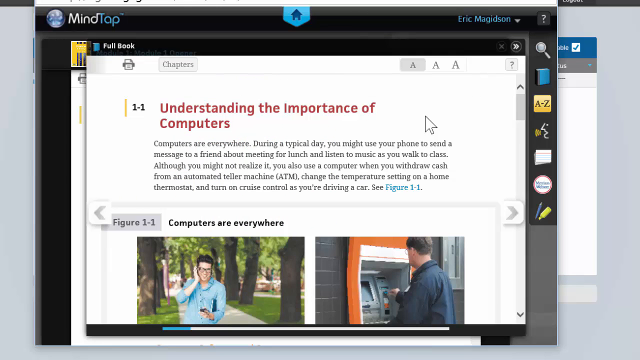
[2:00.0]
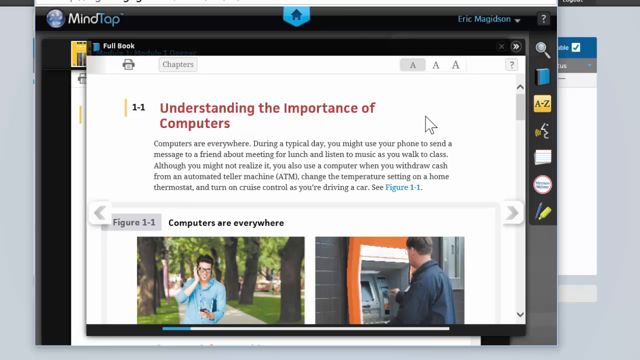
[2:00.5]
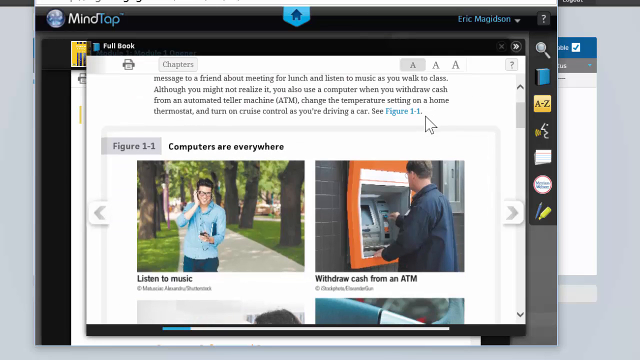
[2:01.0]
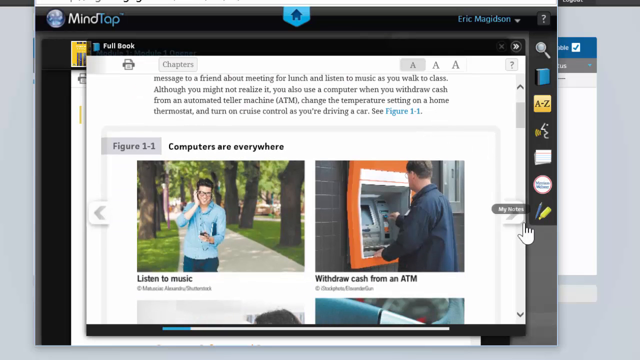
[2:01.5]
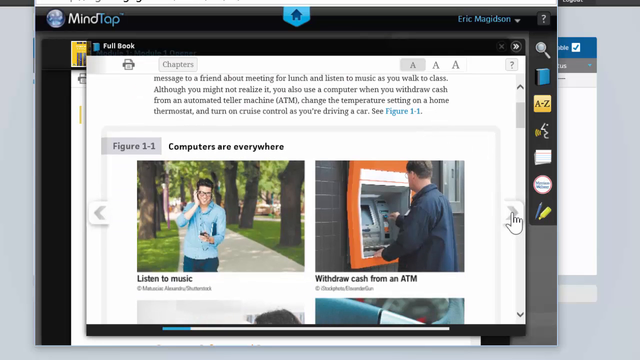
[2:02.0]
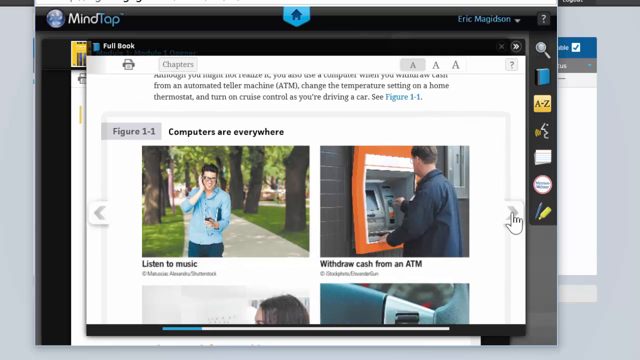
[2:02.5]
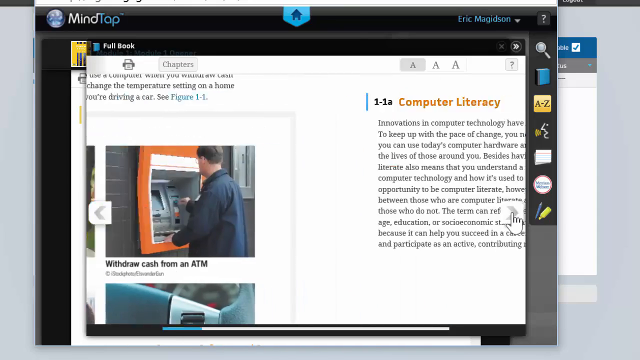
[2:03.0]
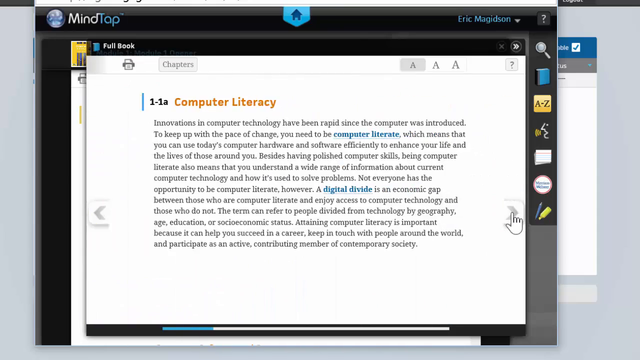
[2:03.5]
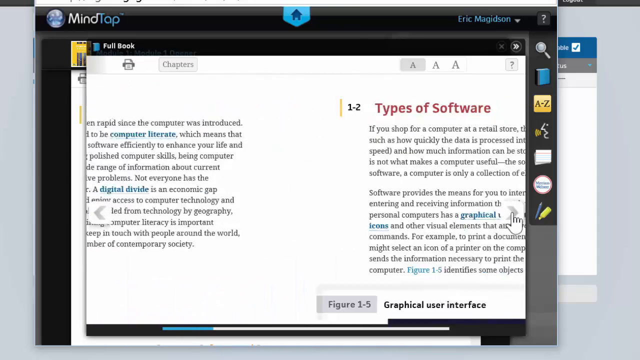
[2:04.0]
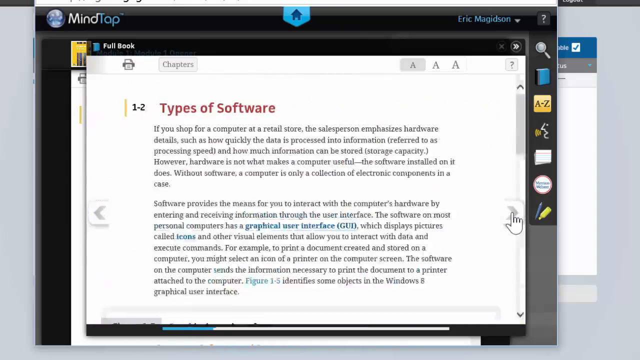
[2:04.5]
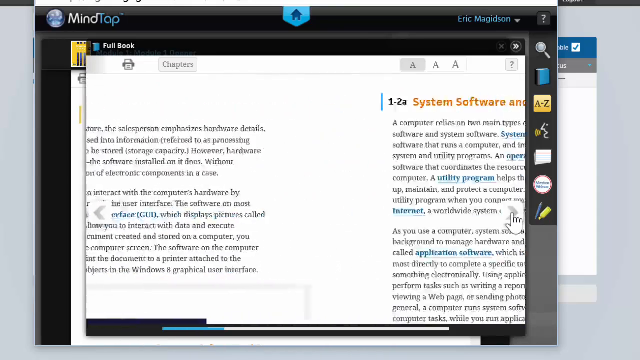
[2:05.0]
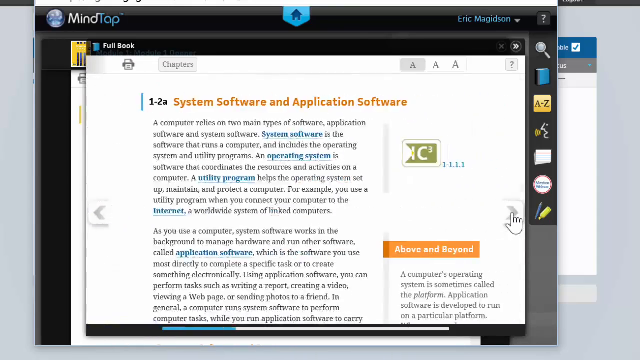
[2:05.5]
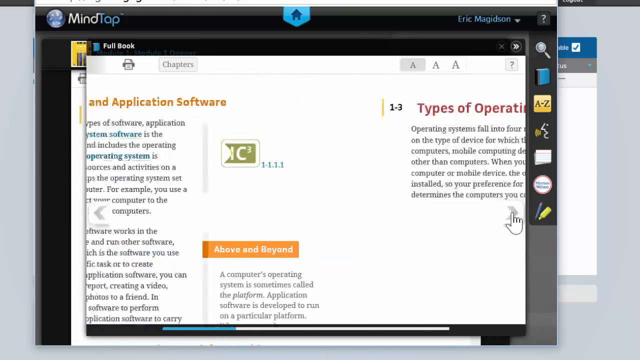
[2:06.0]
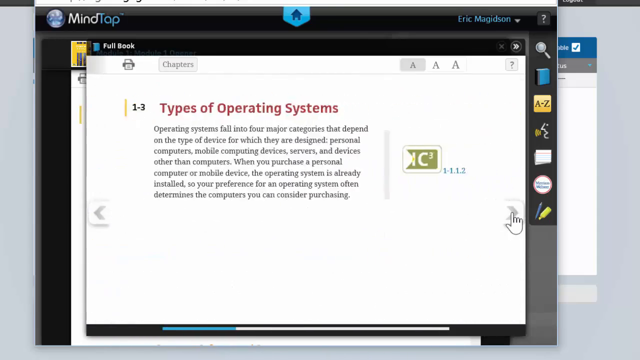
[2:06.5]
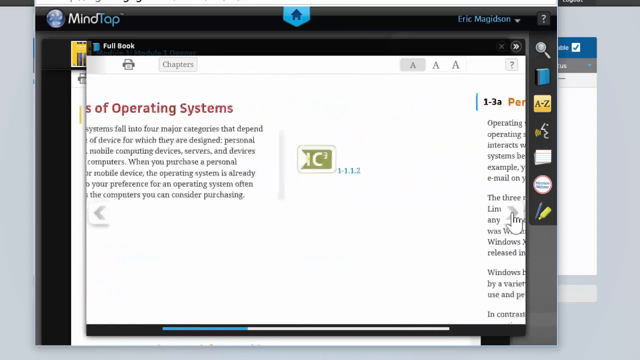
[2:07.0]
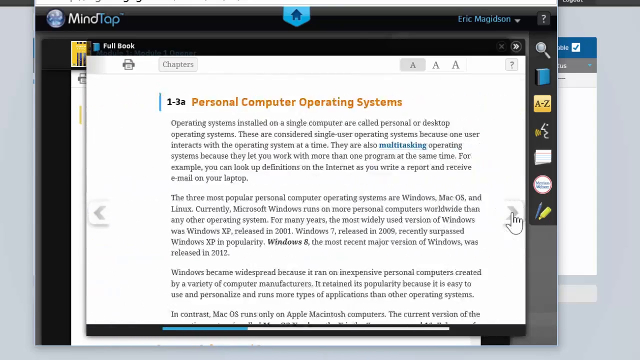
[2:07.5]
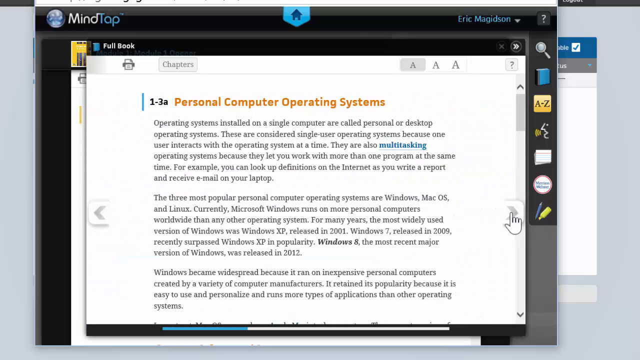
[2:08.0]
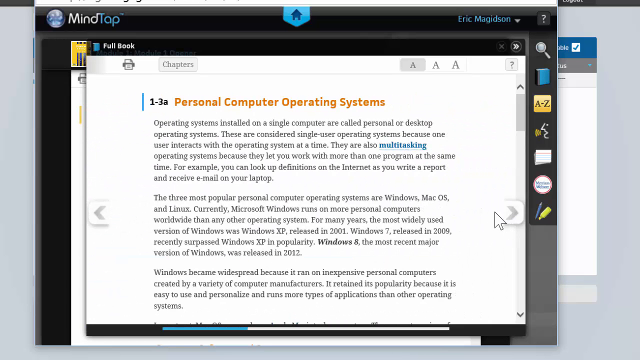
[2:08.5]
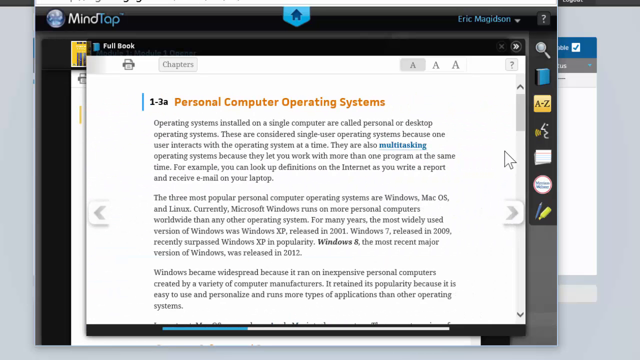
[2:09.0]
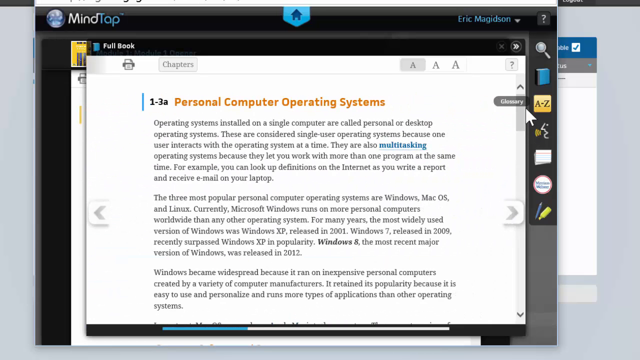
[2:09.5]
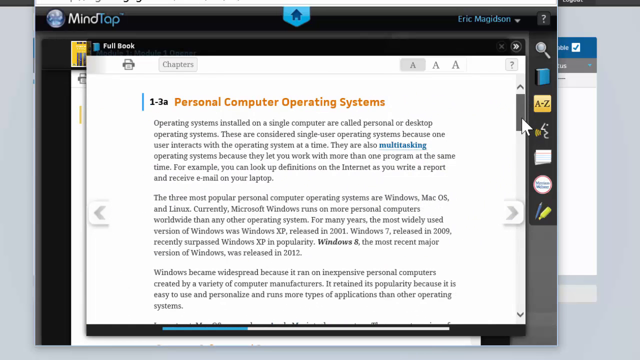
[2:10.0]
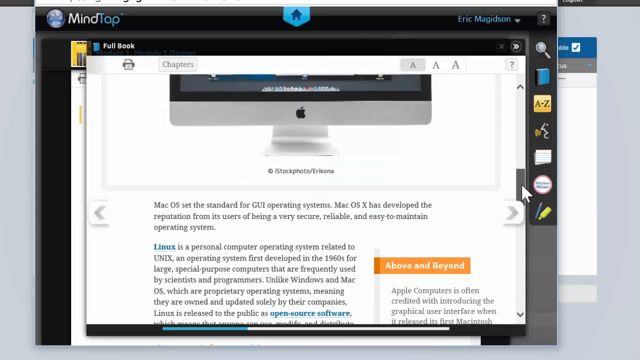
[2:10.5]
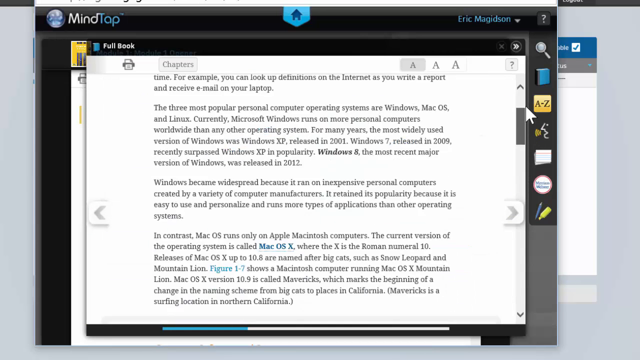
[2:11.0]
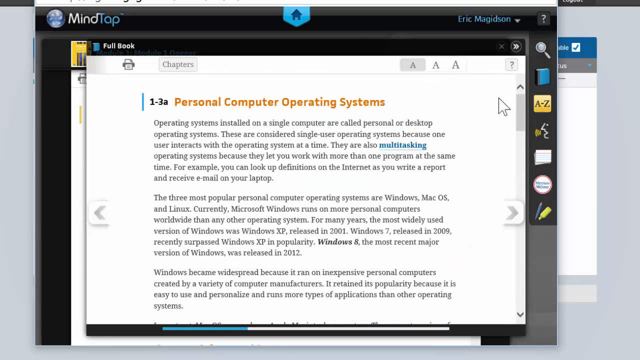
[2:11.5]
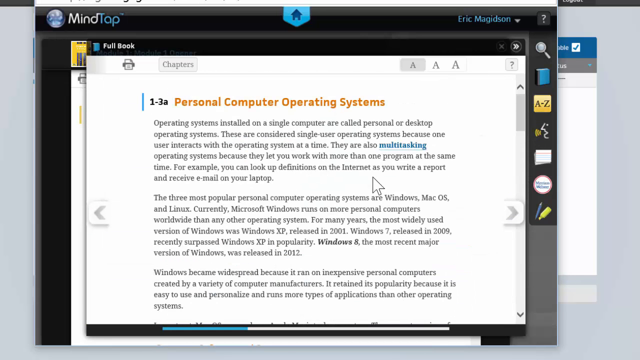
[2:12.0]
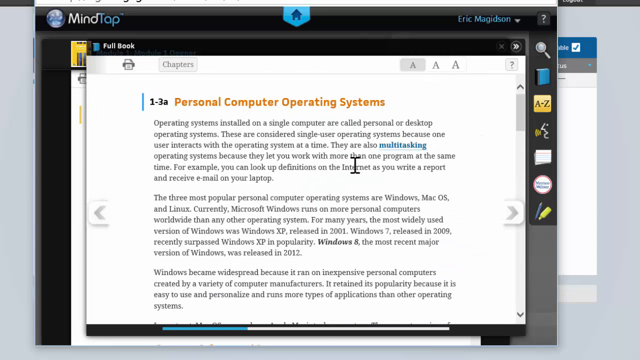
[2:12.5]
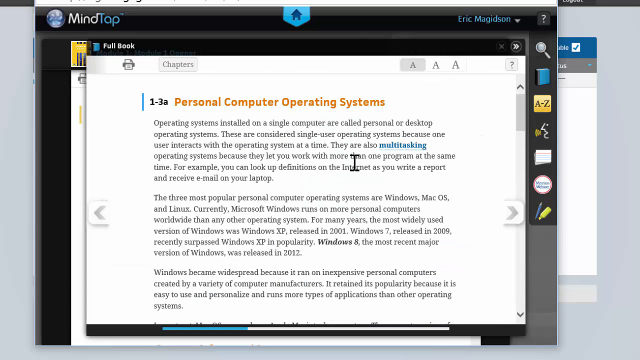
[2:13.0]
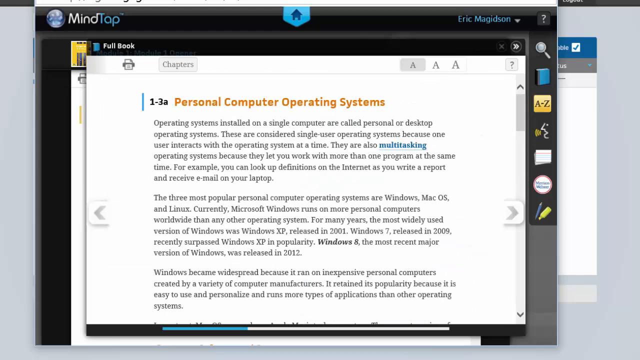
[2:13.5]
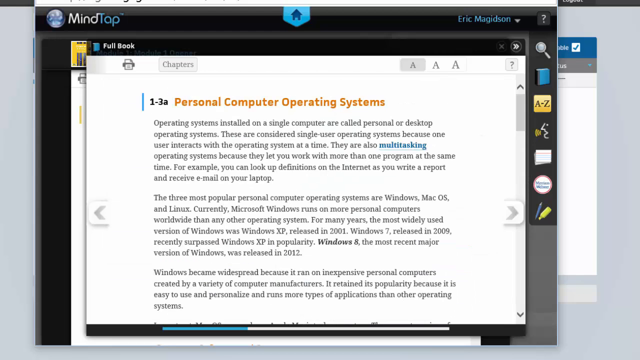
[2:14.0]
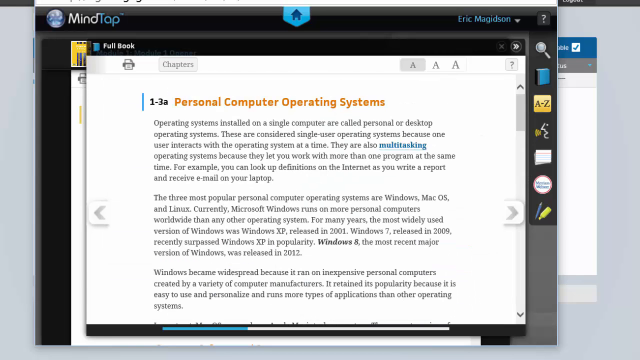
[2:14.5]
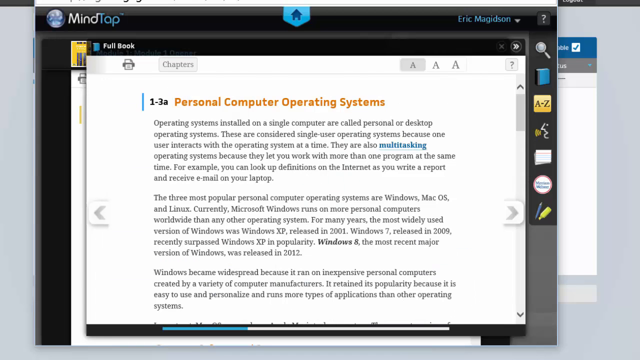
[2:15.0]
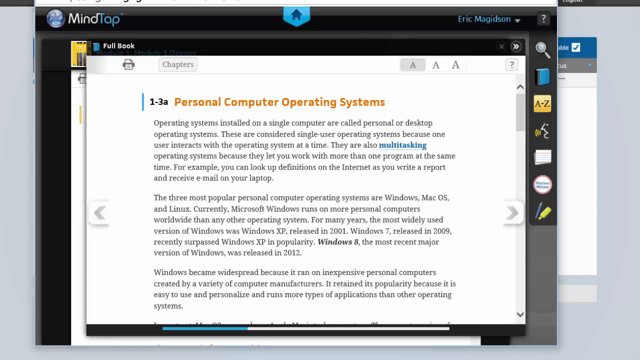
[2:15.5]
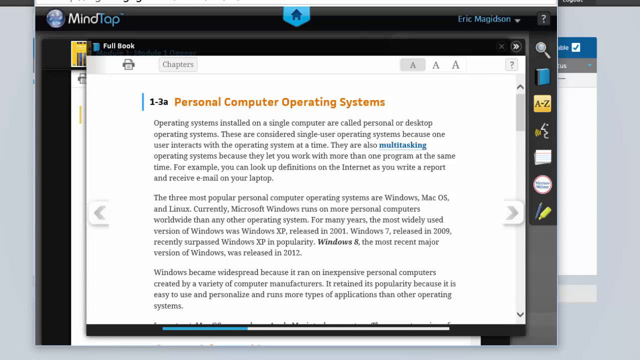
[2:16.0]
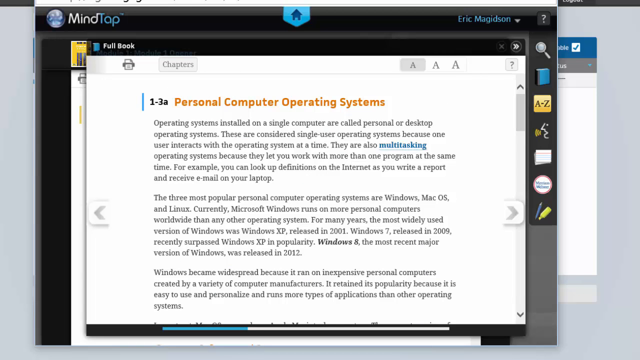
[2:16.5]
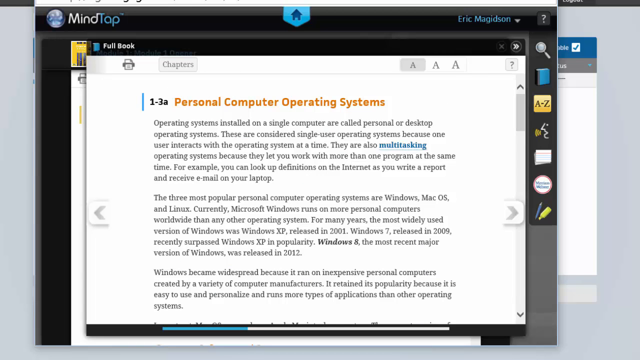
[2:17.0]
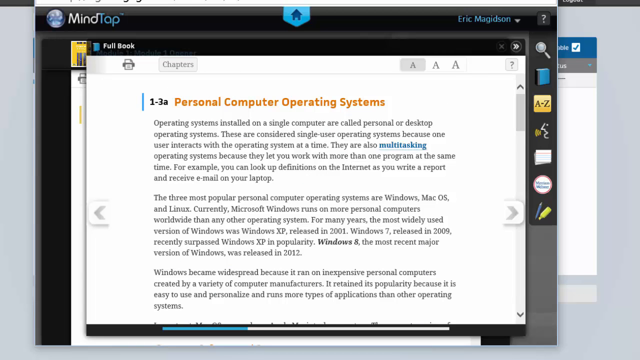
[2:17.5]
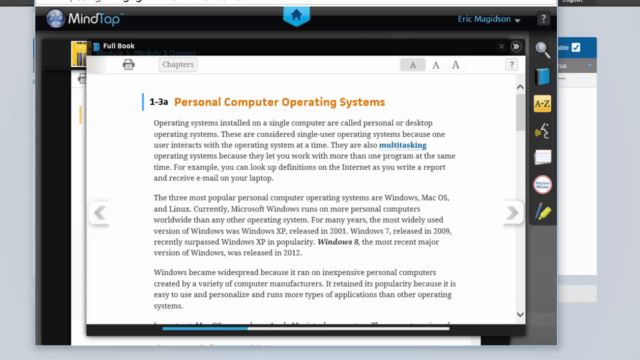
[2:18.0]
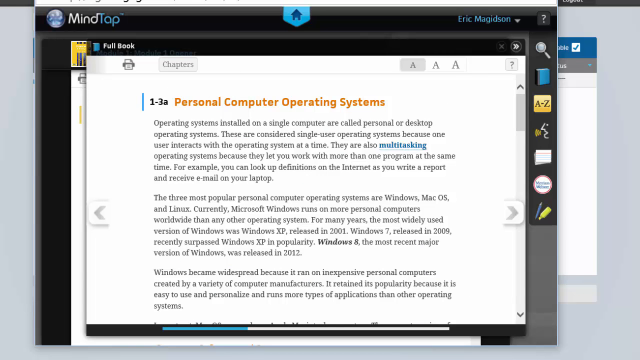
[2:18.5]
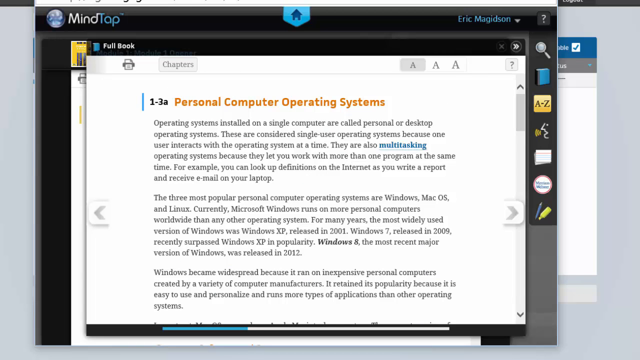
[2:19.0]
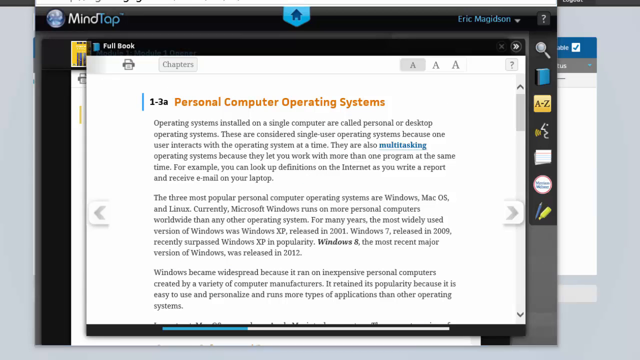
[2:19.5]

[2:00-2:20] A web page is positioned in the center of the frame, slightly off-center to the left, containing several photos. After a few moments the cursor clicks on gray arrows pointing to the right. Each click brings up different web pages: some contain images inside frames, while others contain paragraphs of black, orange and blue writing on a white background. Some of these pages also contain images highlighted on the right or left side. Toward the end, the cursor scrolls through some of these pages from top to bottom and back, revealing more photos and paragraphs in their lower portions. The cursor movement is natural and fluid.